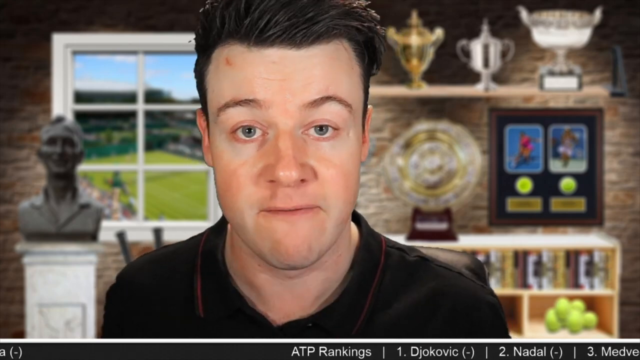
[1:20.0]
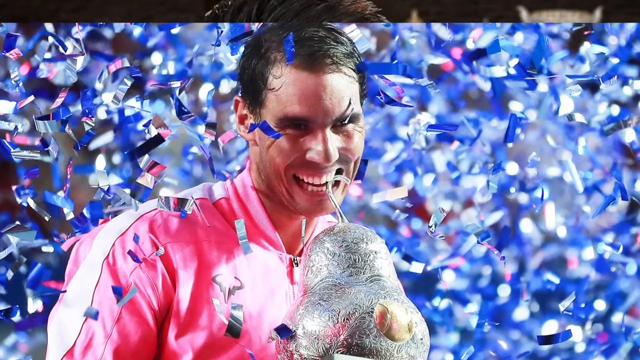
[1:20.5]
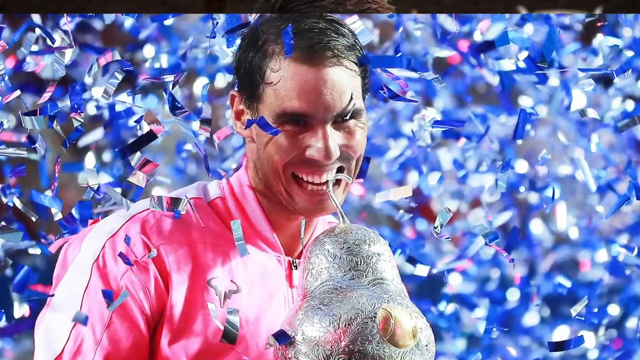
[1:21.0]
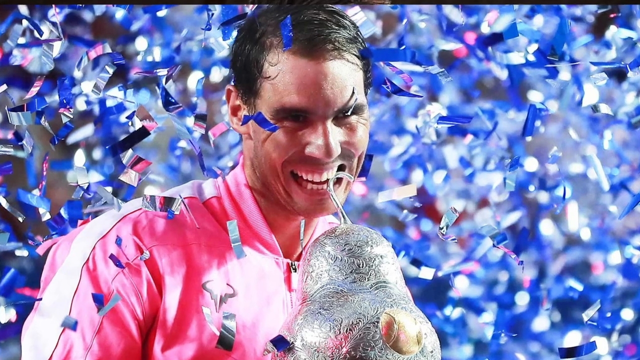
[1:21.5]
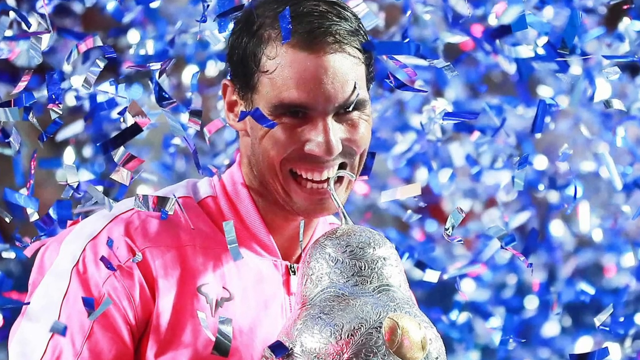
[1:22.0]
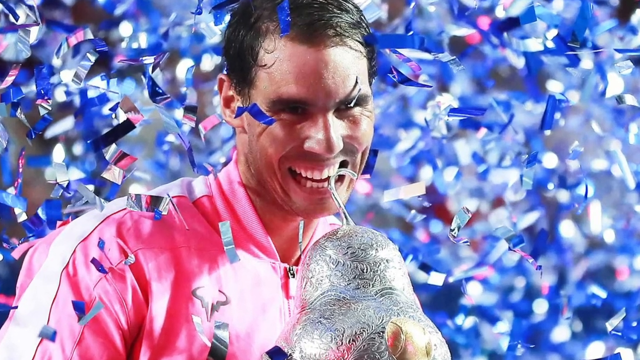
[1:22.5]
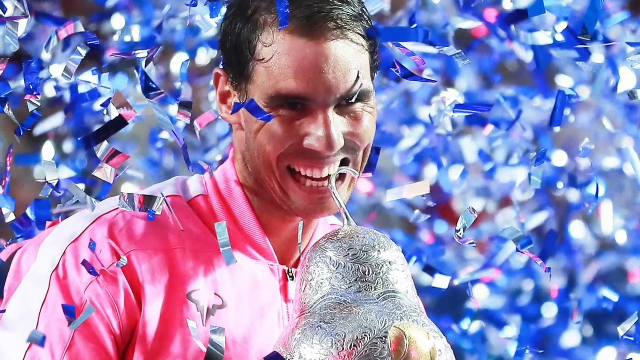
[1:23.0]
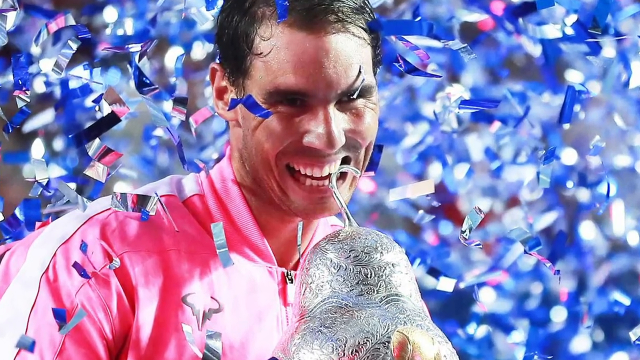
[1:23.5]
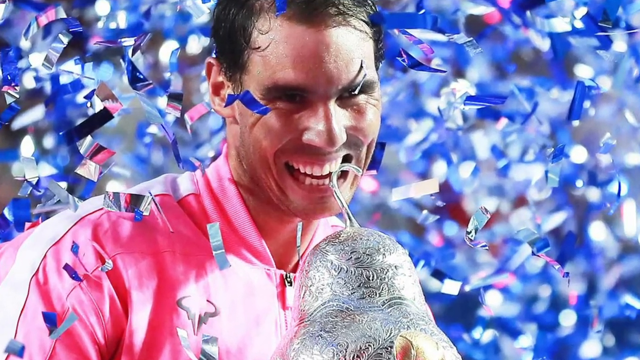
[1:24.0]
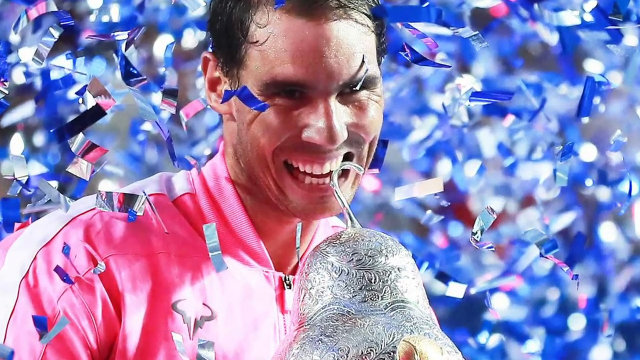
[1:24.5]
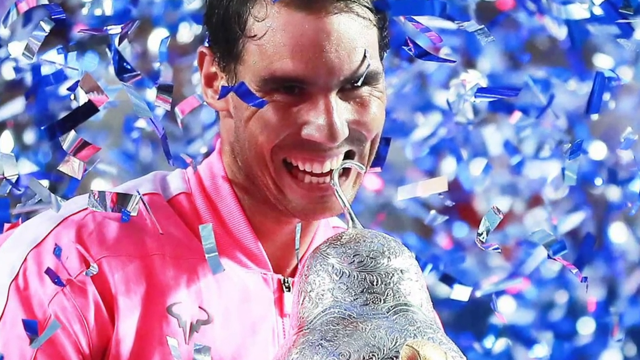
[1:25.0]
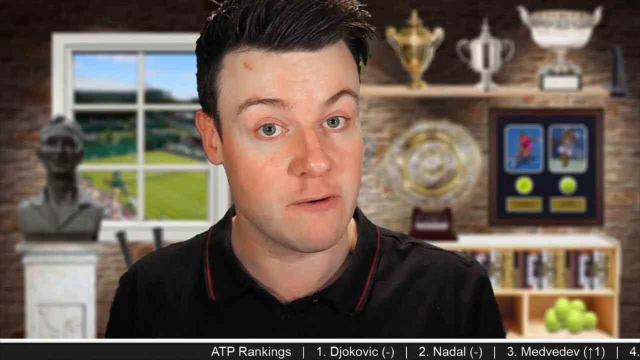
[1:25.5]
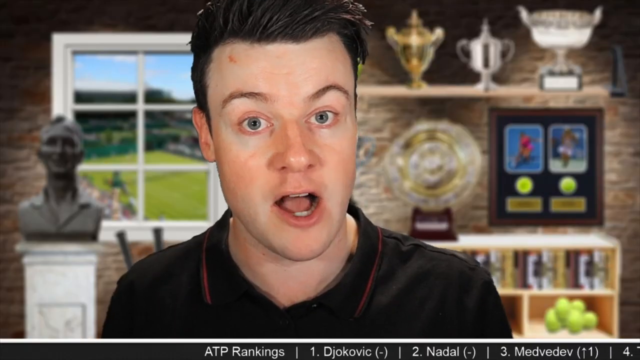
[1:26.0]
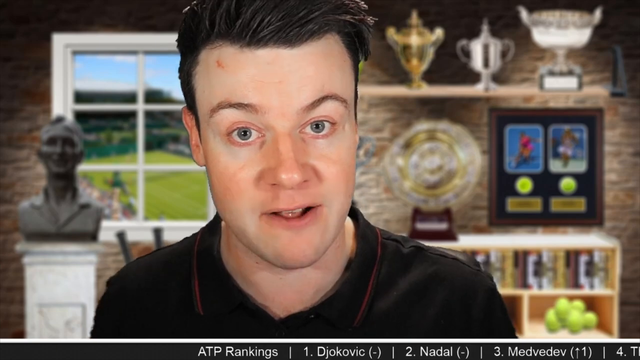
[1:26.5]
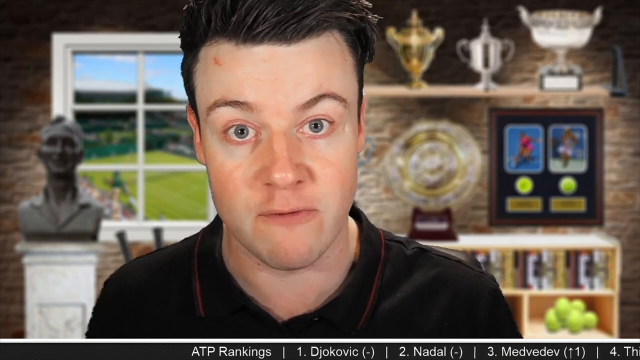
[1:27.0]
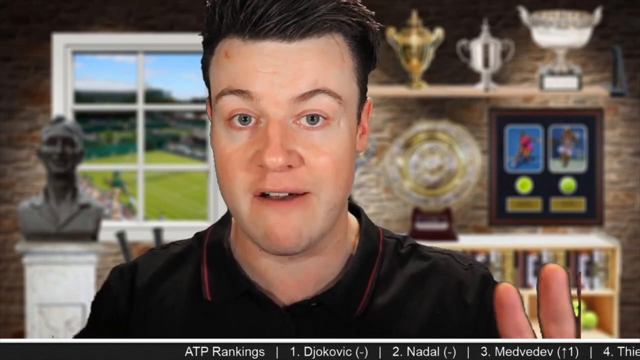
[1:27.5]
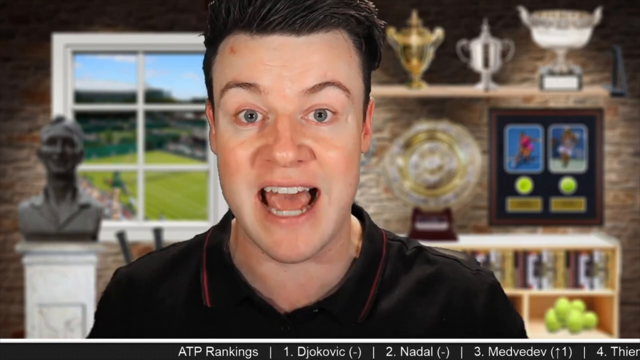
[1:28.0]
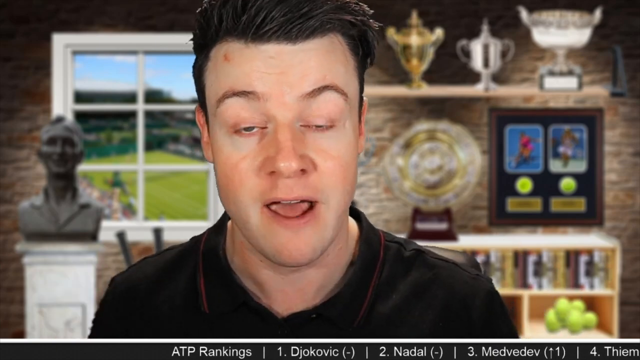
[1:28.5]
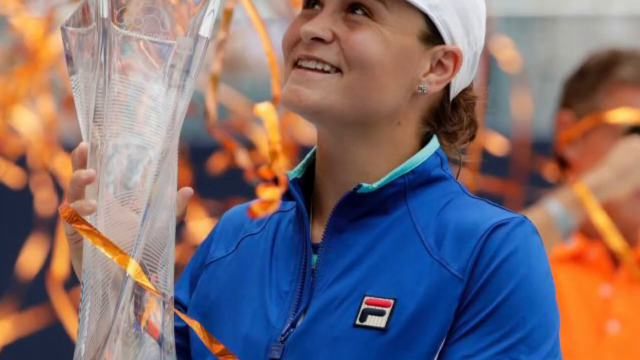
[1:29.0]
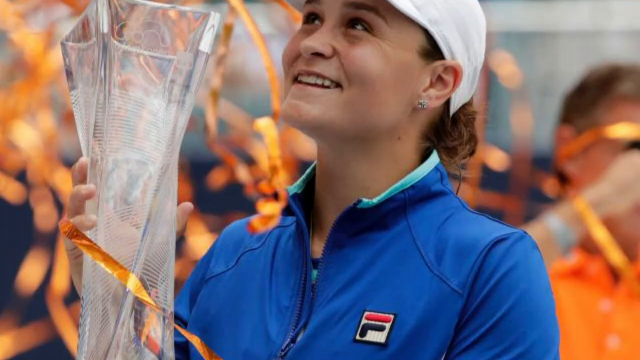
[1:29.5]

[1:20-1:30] The host is a man in his 20s with fair skin and brown hair combed to the right. The background is sort of a shelf with a lot of fake tennis trophies on it, a statue, and a window looking out to a grass tennis court. A picture briefly shows Rafael Nadal celebrating a championship win, with blue confetti everywhere around him; he wears a pink top, holds a trophy and smiles, and the photo zooms in on his face. The video goes back to the host, who continues talking, and then a picture of Ash Barty celebrating appears. She wears a white baseball cap and a blue top, the trophy is almost like a big glass vase, and there are sort of orange streamers in the background. Another person is visible to her right in the background, a bit blurry.